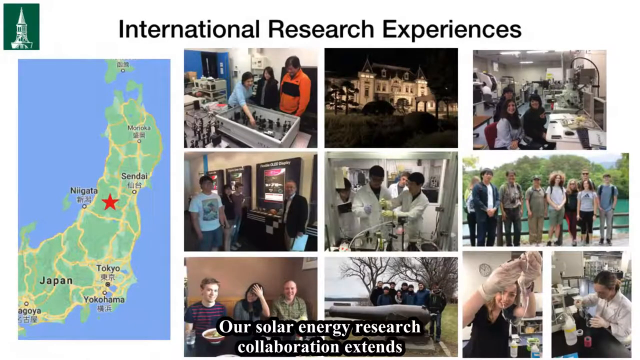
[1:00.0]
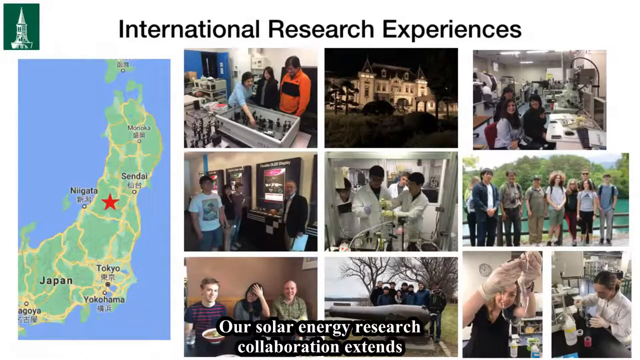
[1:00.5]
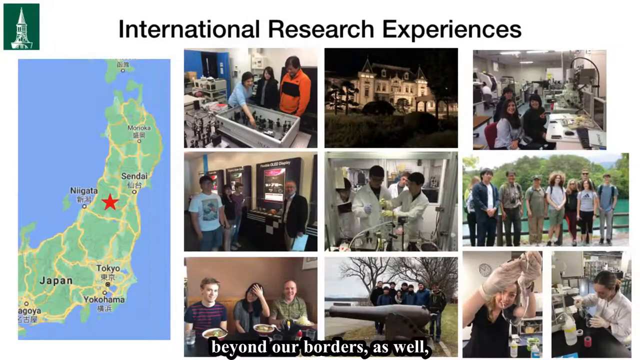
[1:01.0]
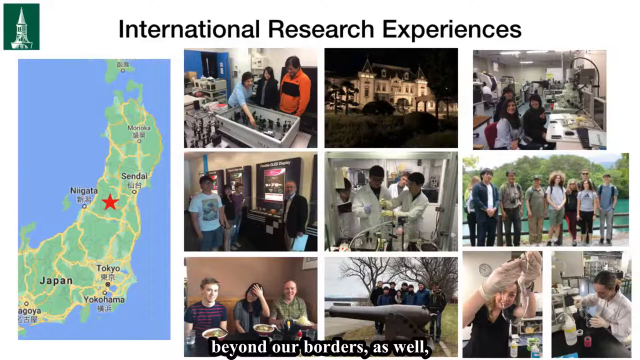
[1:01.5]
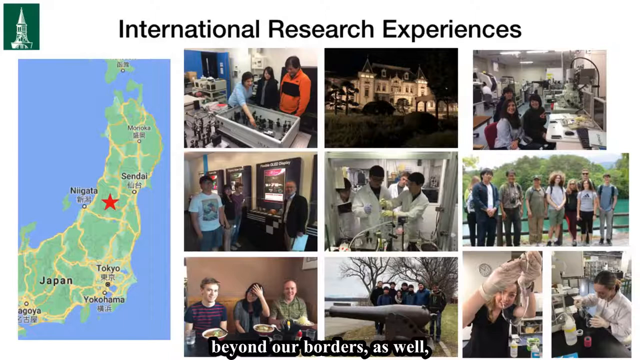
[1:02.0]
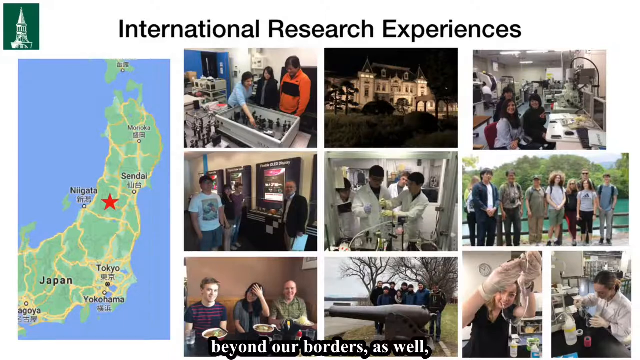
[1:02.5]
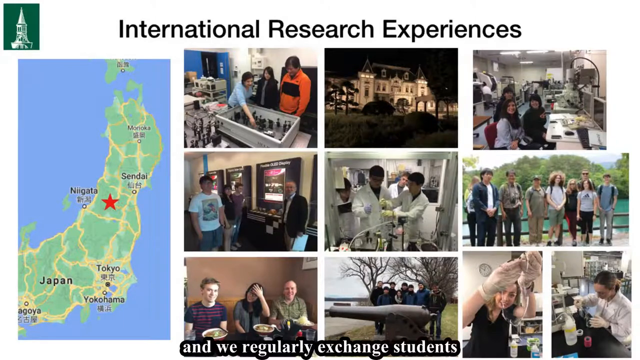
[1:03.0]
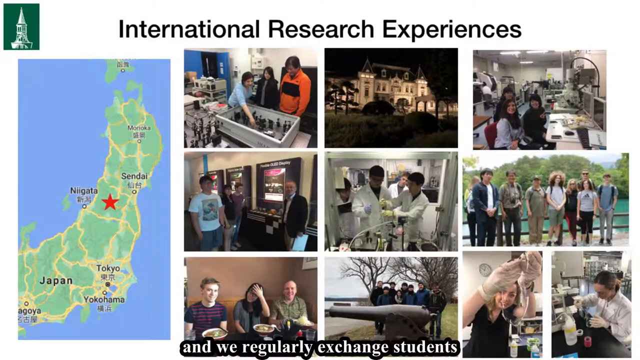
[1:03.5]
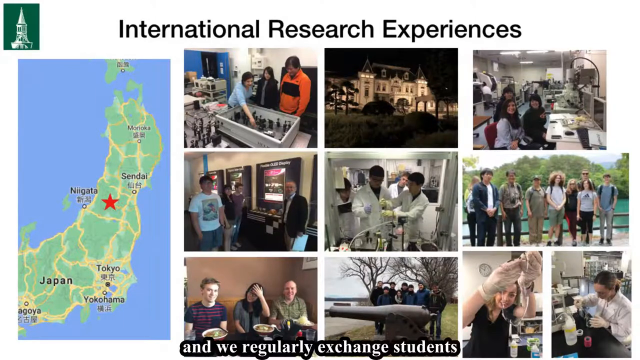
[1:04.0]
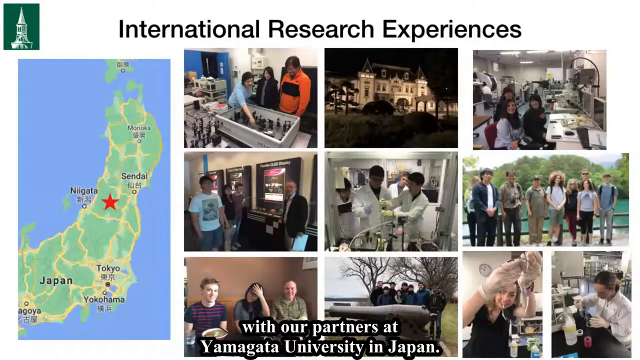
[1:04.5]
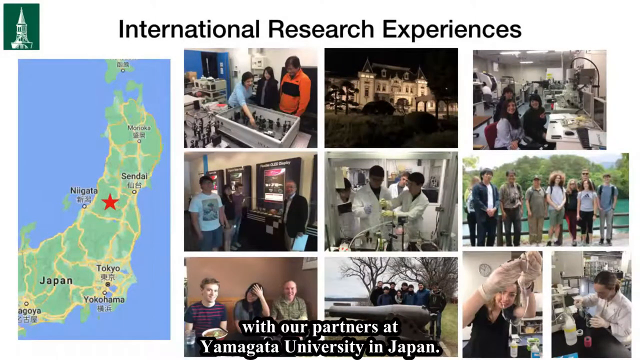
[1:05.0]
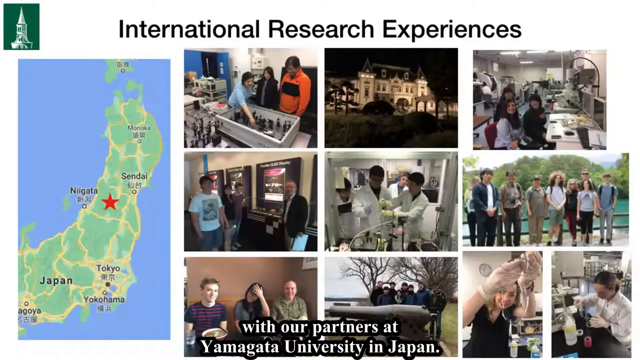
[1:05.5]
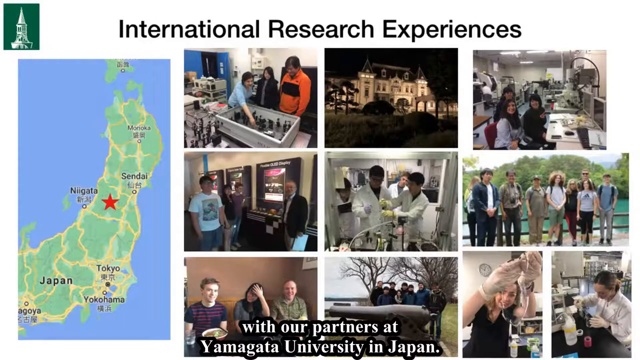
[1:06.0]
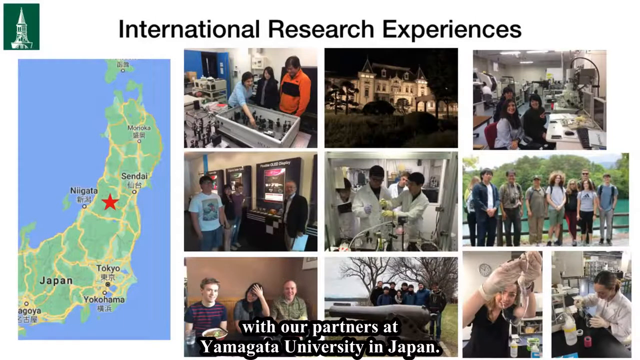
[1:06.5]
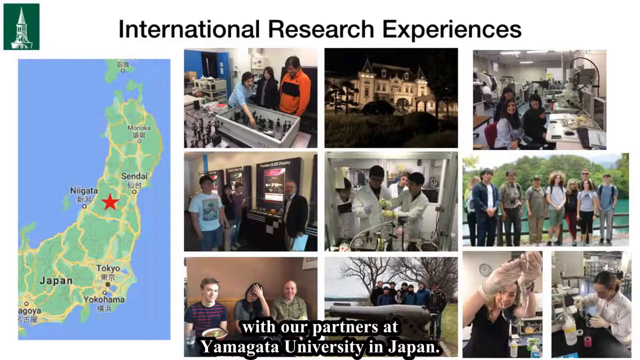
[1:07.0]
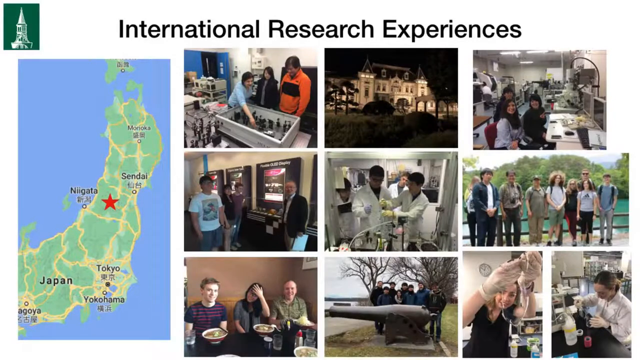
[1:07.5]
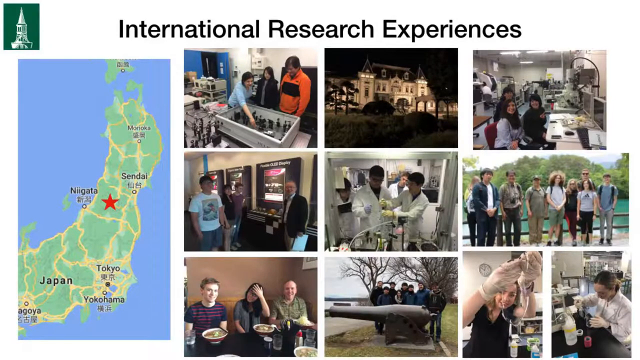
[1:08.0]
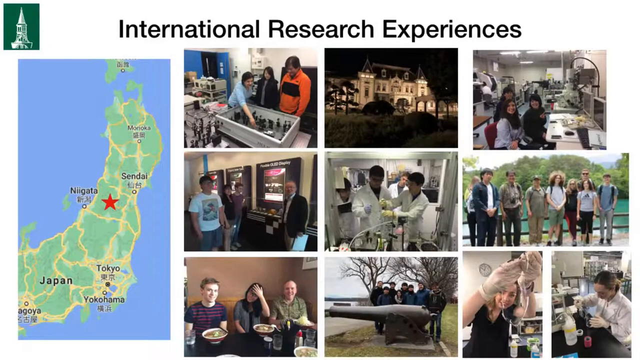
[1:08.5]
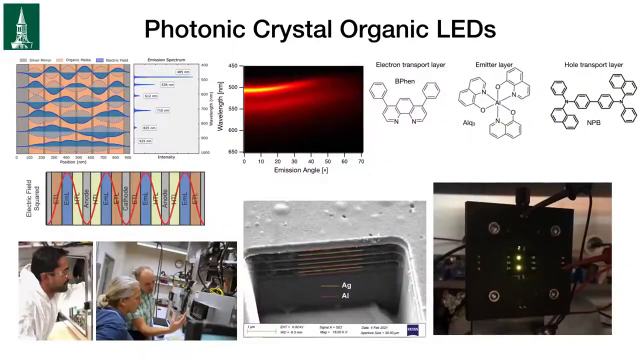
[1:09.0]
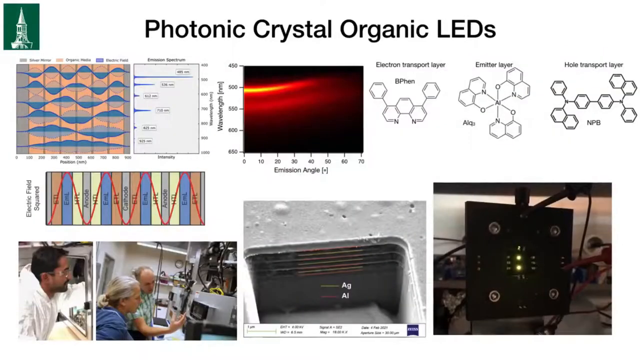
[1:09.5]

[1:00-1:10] Professor Matthew White continues his presentation, talking about international research experiences. A map of Japan shows Yokohama, Tokyo, Nagata and Sendai. Several images show people working in labs; the first shows a man in an orange and black shirt, a woman in a blue shirt and another woman in a black jacket in a lab. There is also a picture of a large mansion, several individuals standing outside behind a body of water, another group standing in what looks like a park, more images of individuals working in a lab, and an image of individuals who look like they are out having a bite to eat. He talks about exchange students at the Yamagata University of Japan.